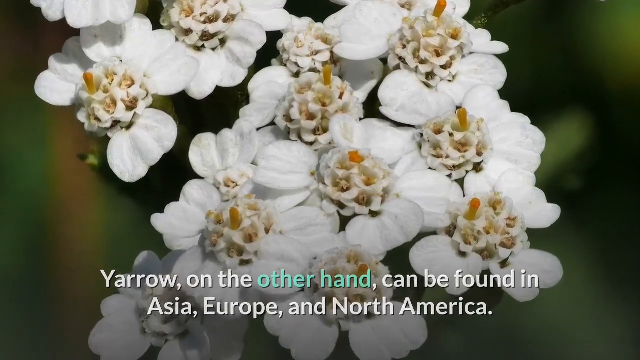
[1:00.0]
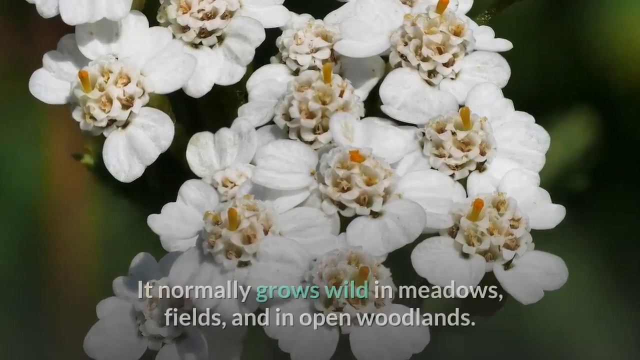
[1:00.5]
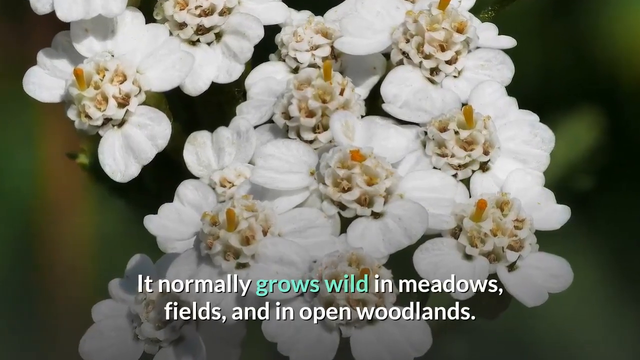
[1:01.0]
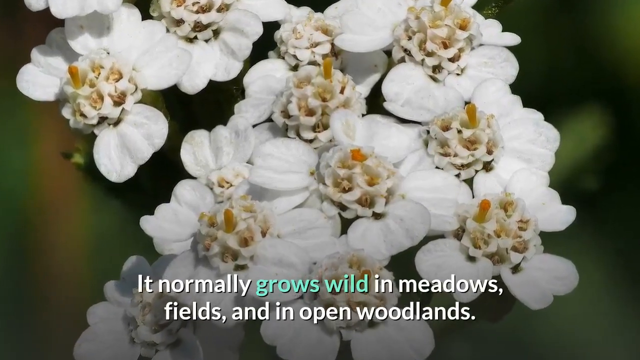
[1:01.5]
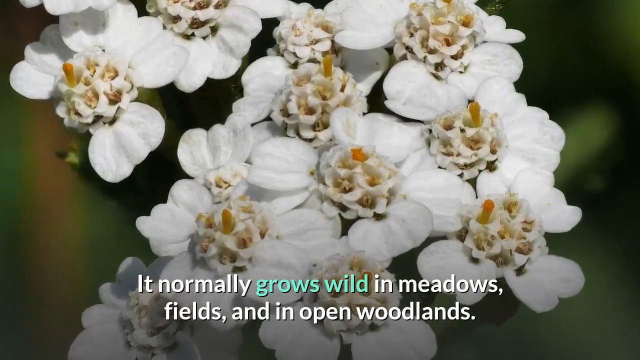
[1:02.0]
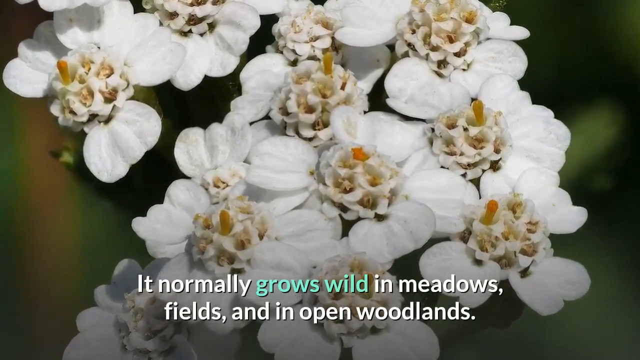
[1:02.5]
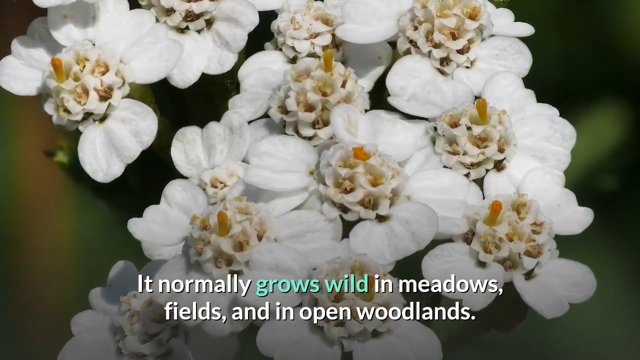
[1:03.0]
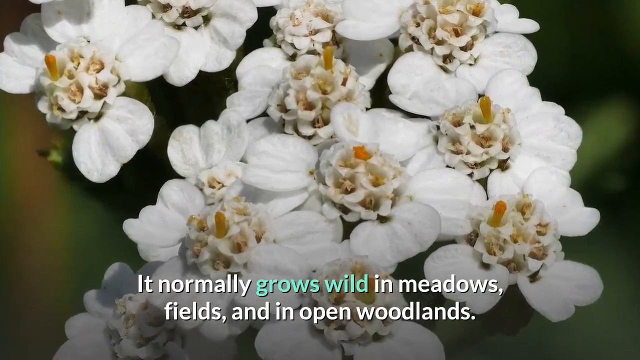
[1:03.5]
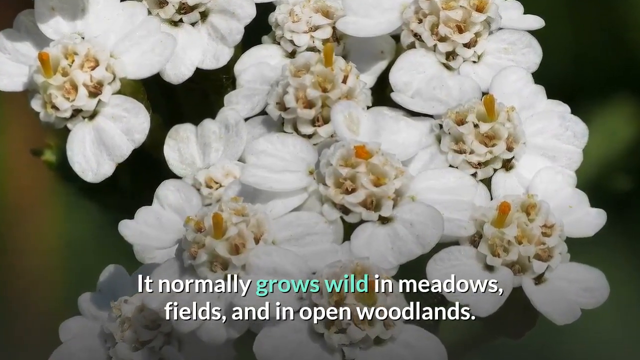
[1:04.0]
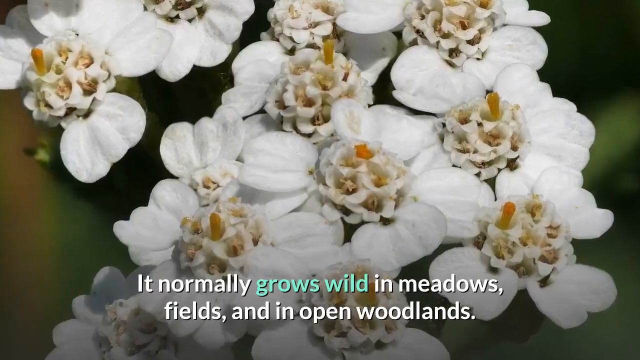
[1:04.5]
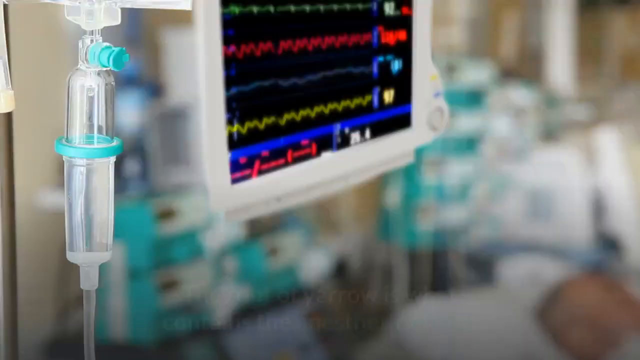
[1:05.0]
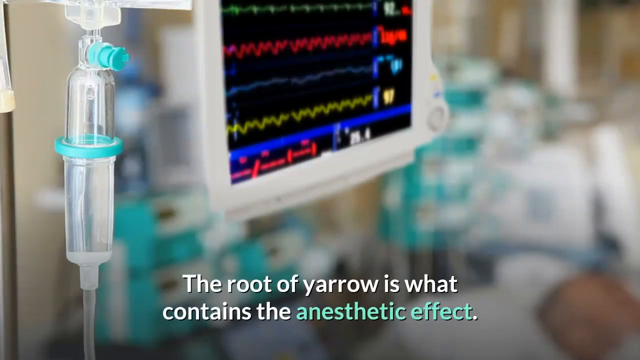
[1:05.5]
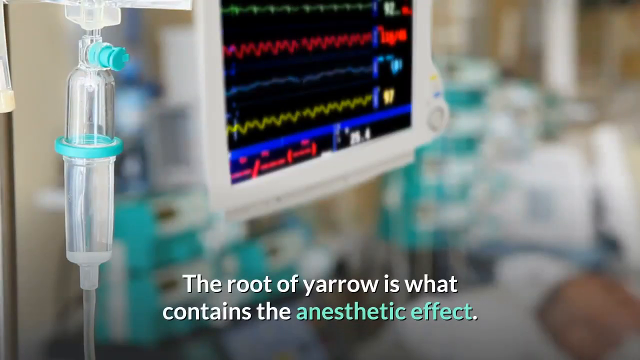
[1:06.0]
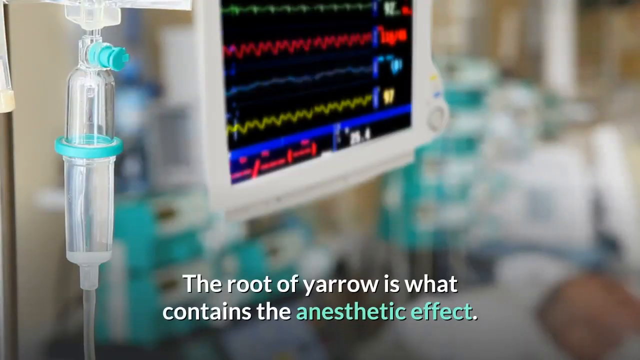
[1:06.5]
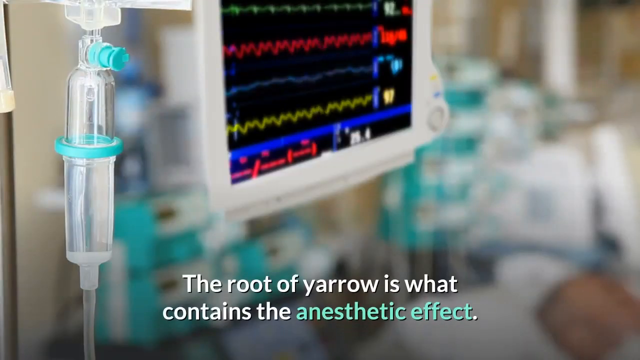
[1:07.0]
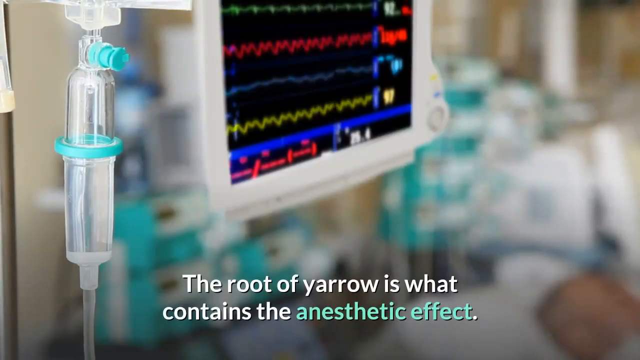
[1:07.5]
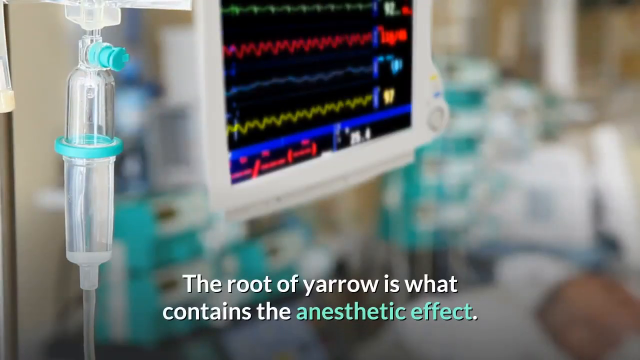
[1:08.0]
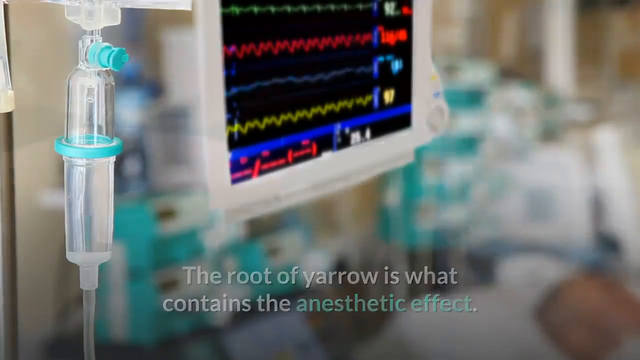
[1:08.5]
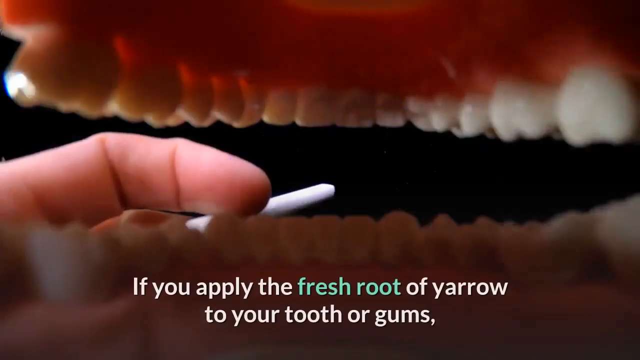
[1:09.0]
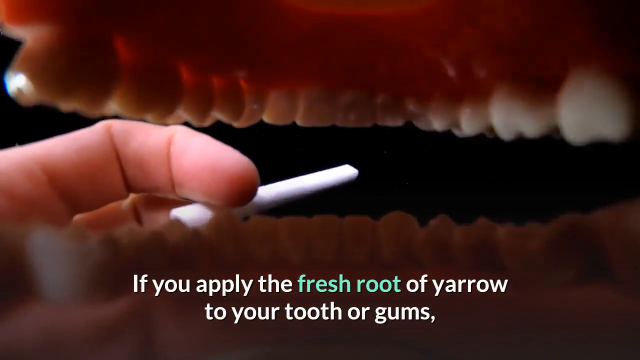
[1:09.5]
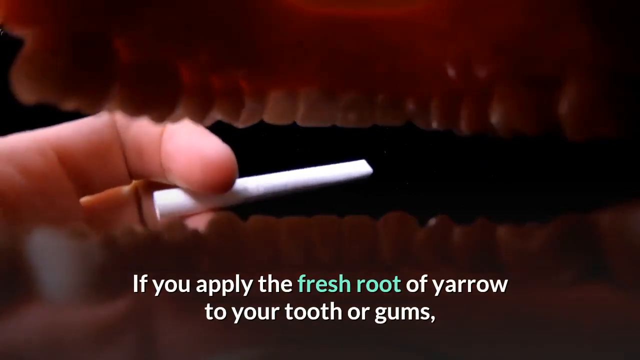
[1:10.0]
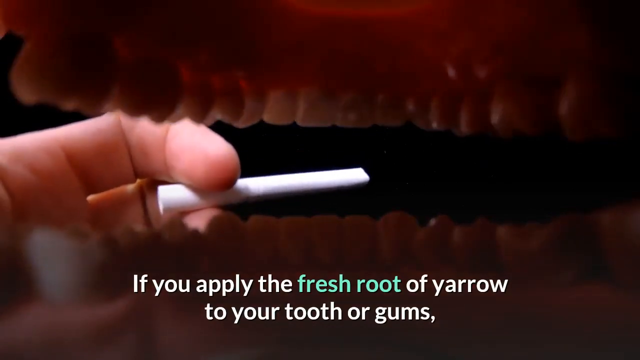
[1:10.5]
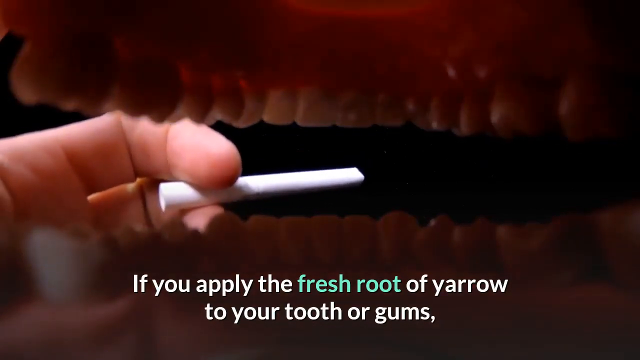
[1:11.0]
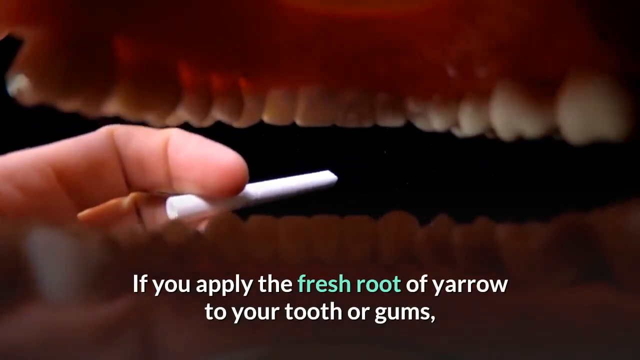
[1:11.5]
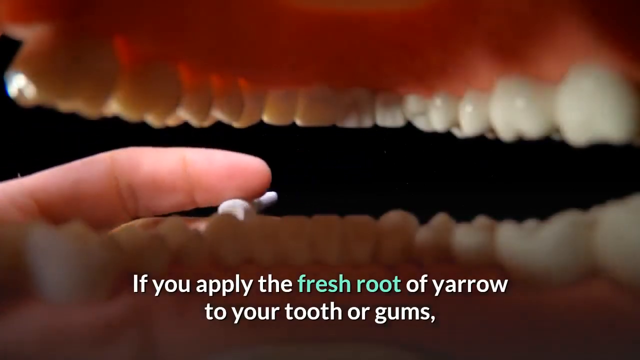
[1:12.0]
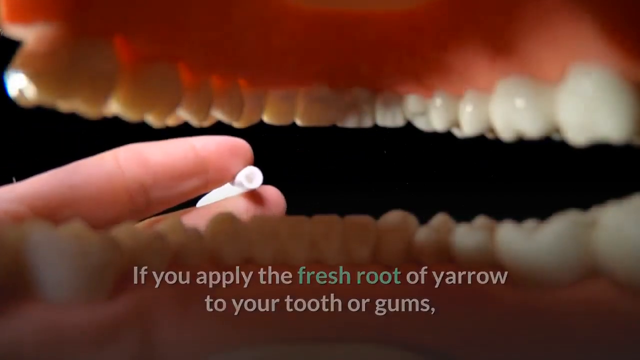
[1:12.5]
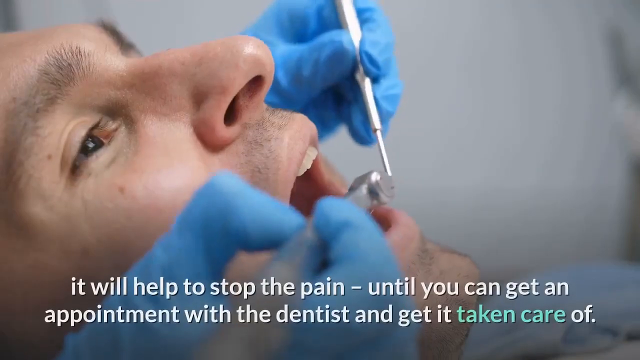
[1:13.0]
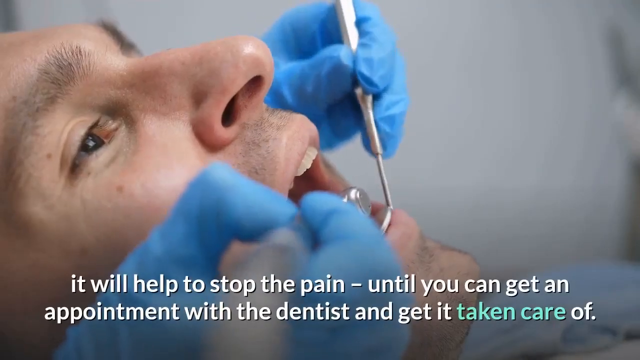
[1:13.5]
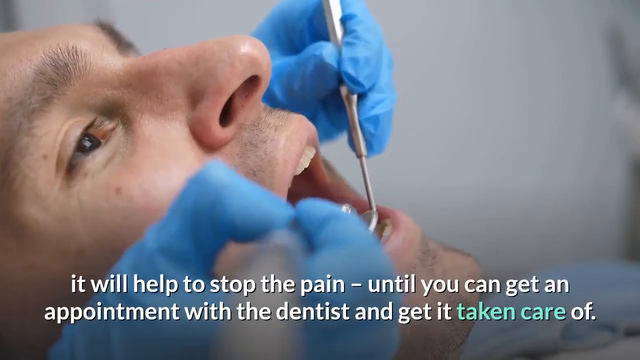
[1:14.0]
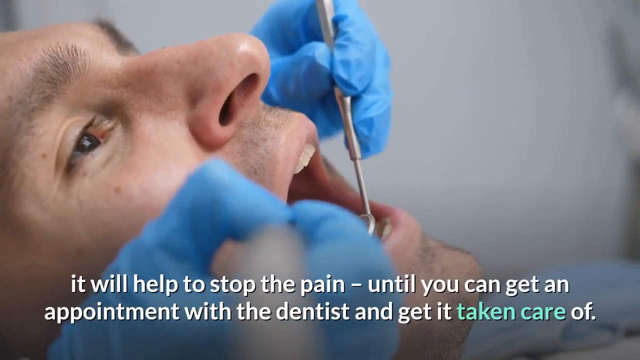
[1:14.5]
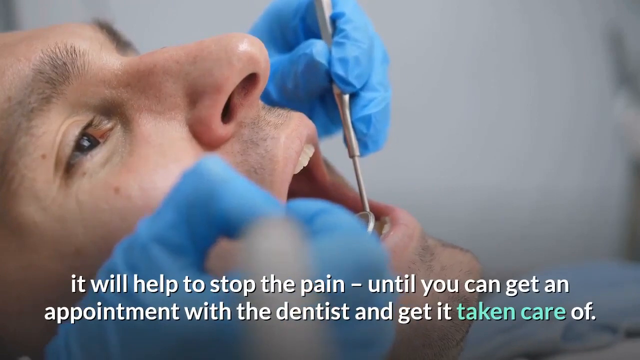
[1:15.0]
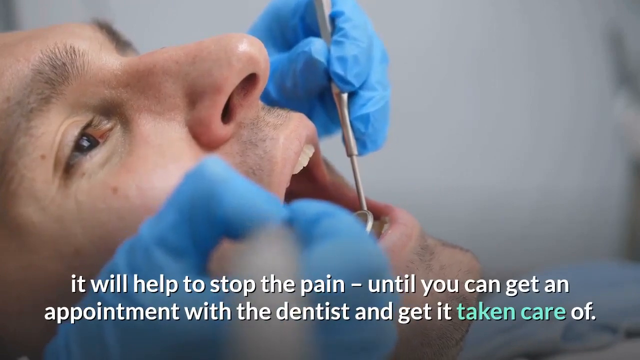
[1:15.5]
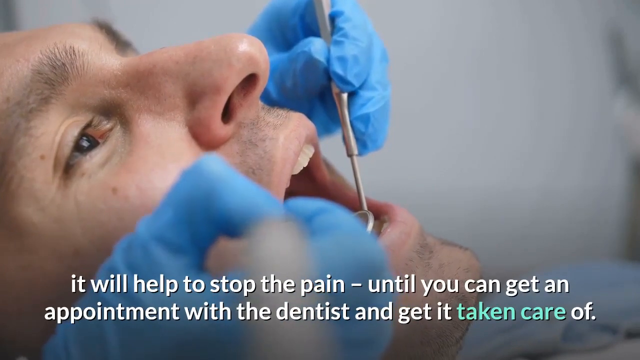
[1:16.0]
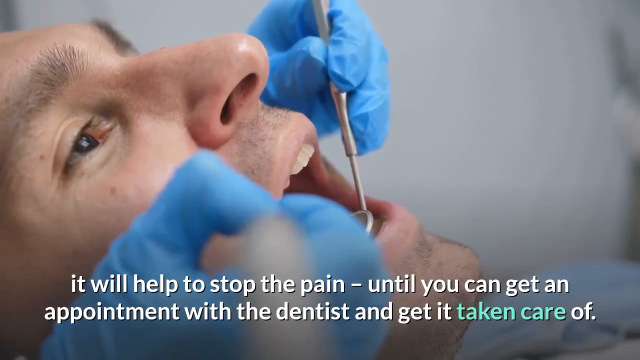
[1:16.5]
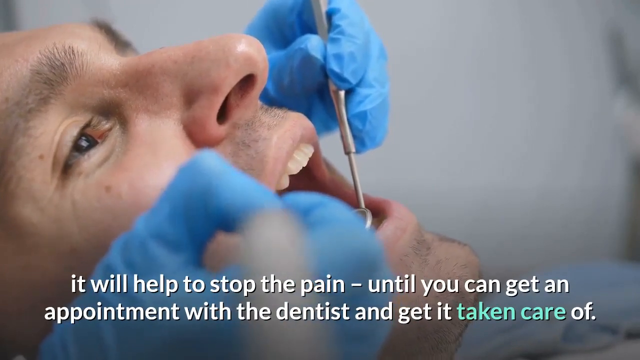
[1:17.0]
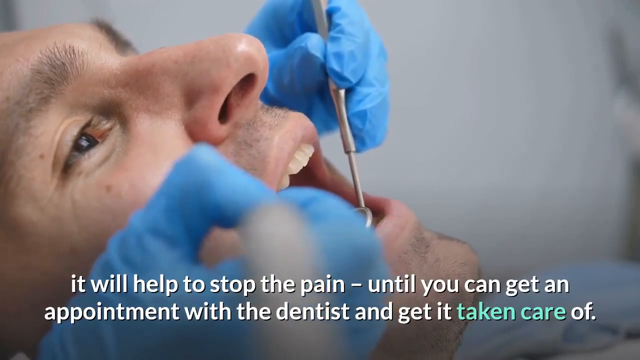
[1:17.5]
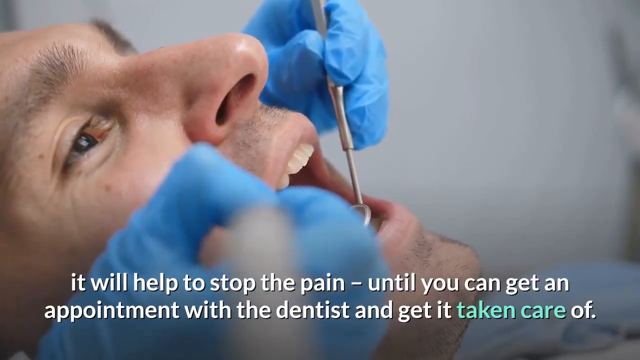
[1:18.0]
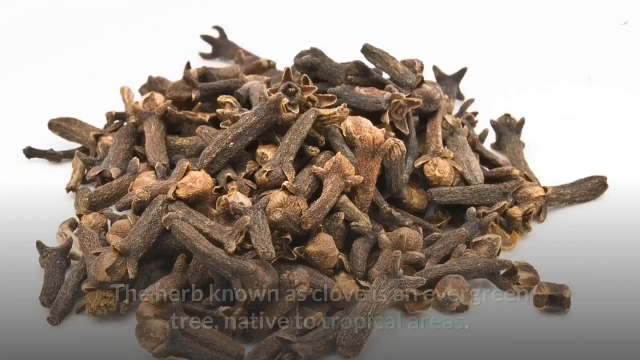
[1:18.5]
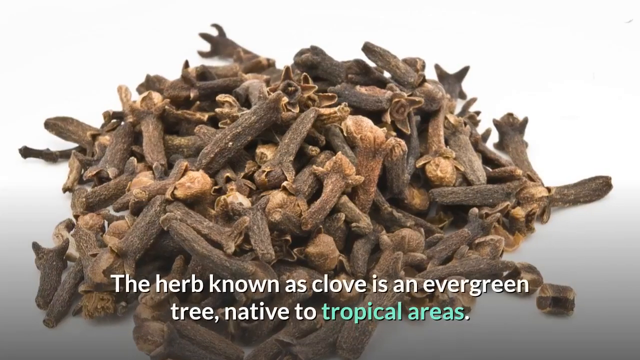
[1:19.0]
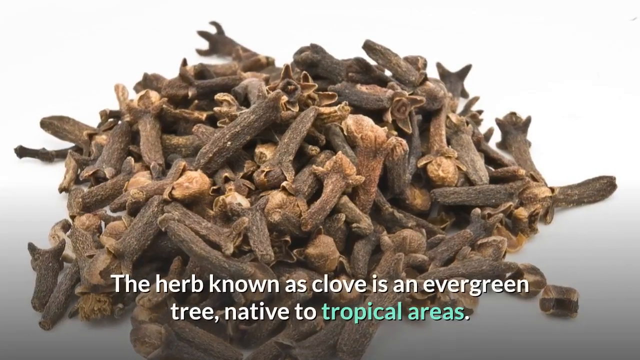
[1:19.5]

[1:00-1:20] The yarrow flowers are shown against a blurred background with tones of green, black and red. The text underneath reads "yarrow, on the other hand, can be found in Asia, Europe, and North America. It normally grows wild in meadows, fields, and in open woodlands." The camera zooms in closer to the flower, and the image changes to a hospital monitor with zigzag lines across the screen showing heart rate, rhythm, respiration and pulse ox: a green line at the top, then a red line, a blue line and a yellow line. An IV pump is to the left of the monitor, and the rest of the hospital room is blurred. The text reads "the root of yarrow is what contains the anesthetic effect." The image changes to a viewpoint as if from inside a mouth, showing the back of a full set of teeth. The mouth is slightly open, and looking out of it everything is black except, on the left side, an index and middle finger that appear to hold a cigarette, a white tubular item. The text at the bottom begins "if you apply the fresh root of yarrow to your gums." Next, a man in a dental chair is shown zoomed in on his face, showing his whole face but not his ears or forehead. He has dark eyebrows and dark scruff, and his mouth is open. A right hand is at the right side of his mouth and a left hand at the left side, each holding a dental device: one is a silver dental mirror, and the other appears to be a dental brush or drill. The text reads "it will help to stop the pain until you can get an appointment with the dentist and get it taken care of."